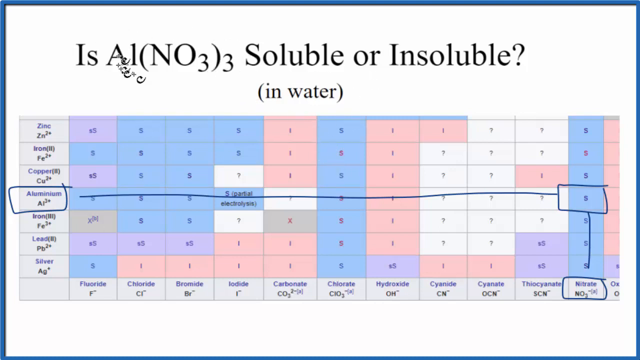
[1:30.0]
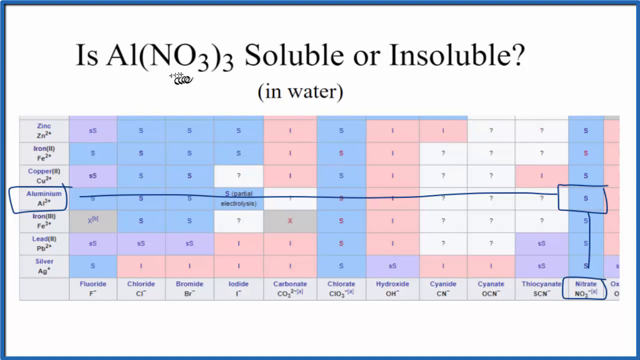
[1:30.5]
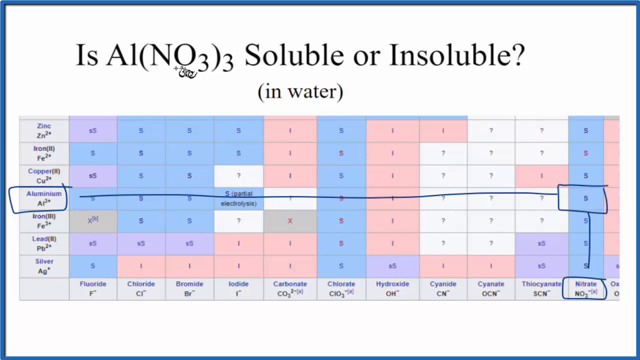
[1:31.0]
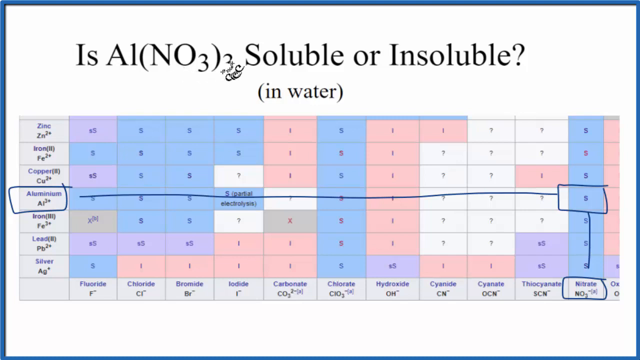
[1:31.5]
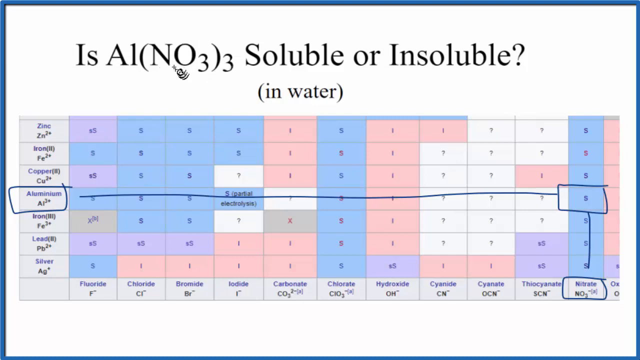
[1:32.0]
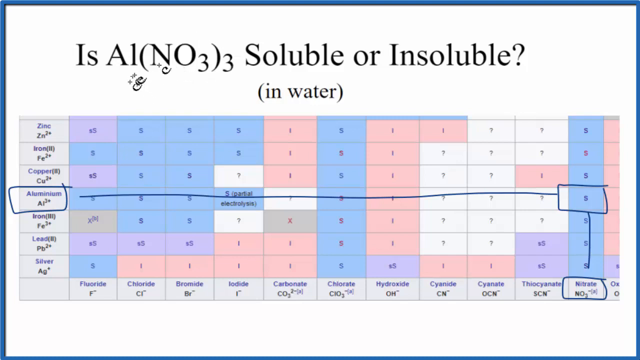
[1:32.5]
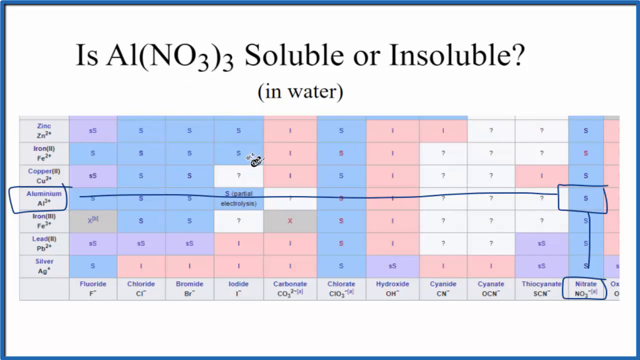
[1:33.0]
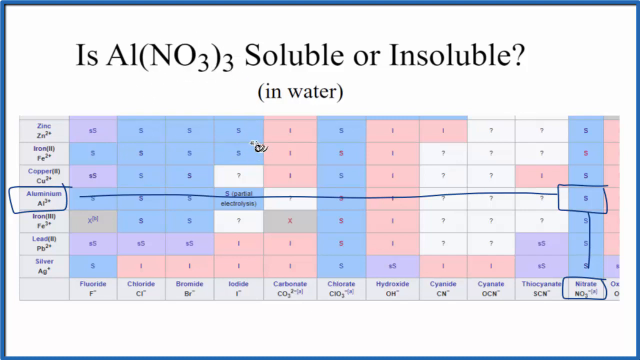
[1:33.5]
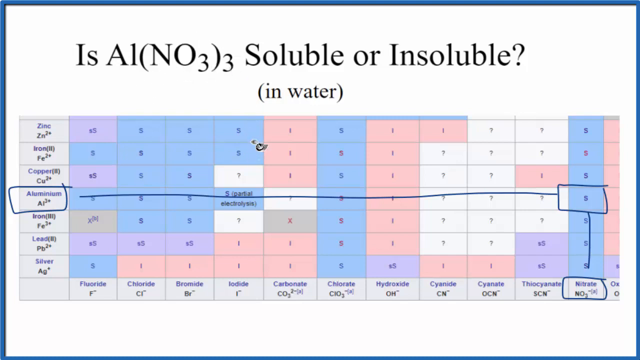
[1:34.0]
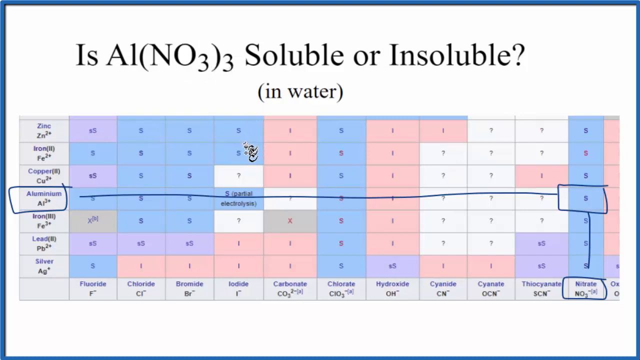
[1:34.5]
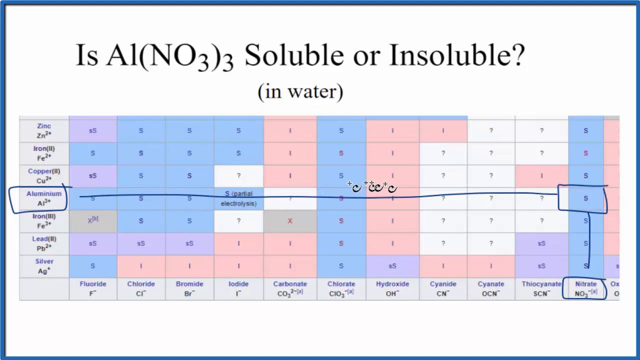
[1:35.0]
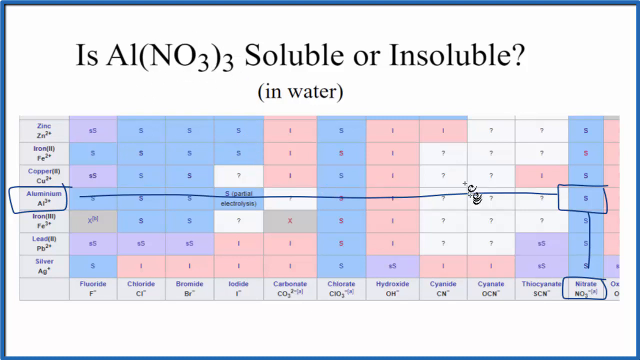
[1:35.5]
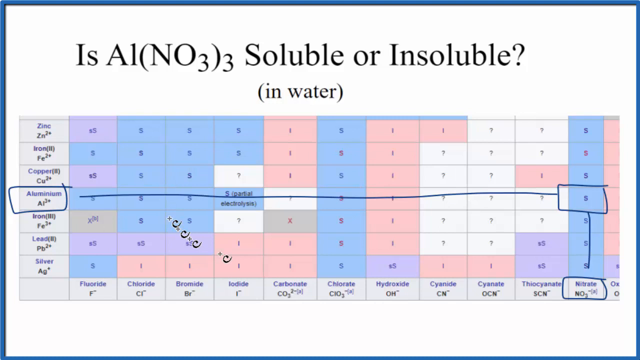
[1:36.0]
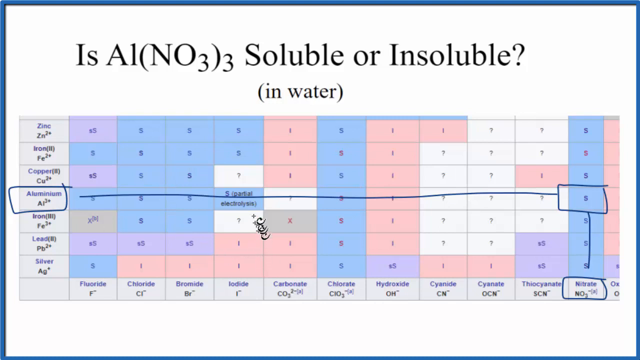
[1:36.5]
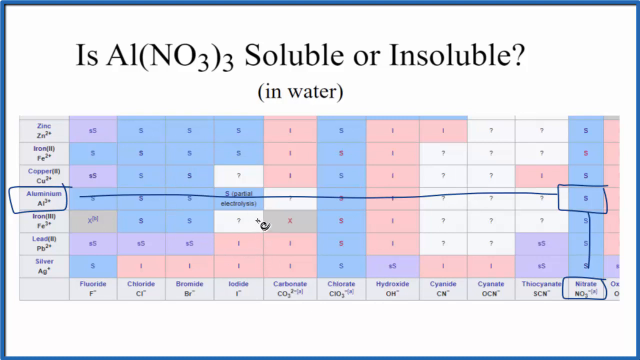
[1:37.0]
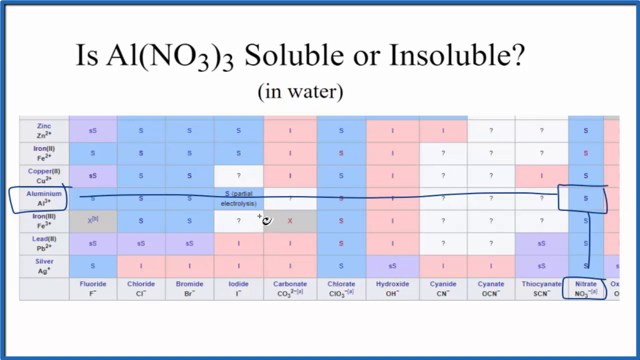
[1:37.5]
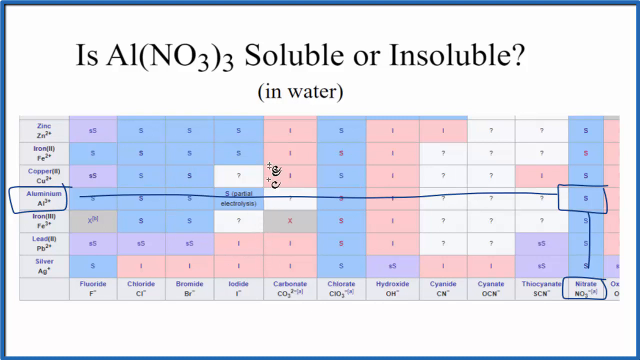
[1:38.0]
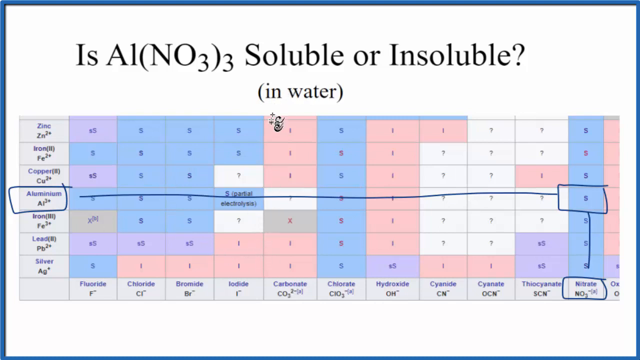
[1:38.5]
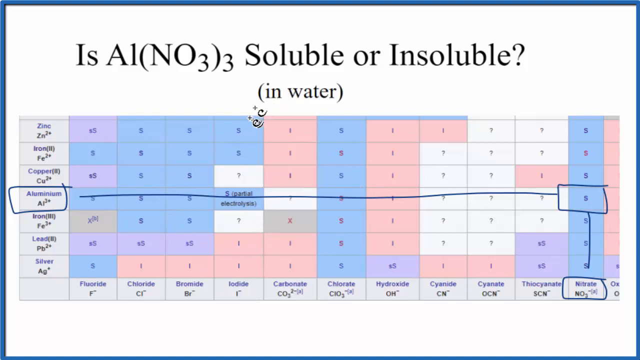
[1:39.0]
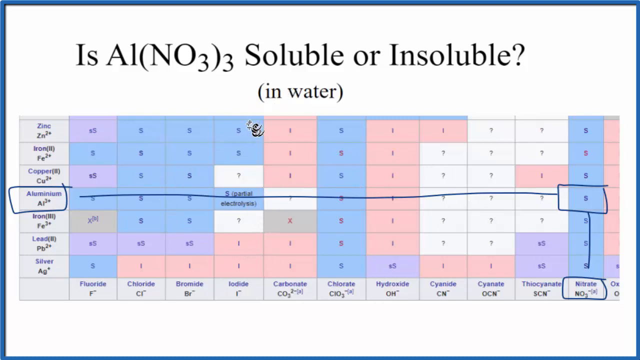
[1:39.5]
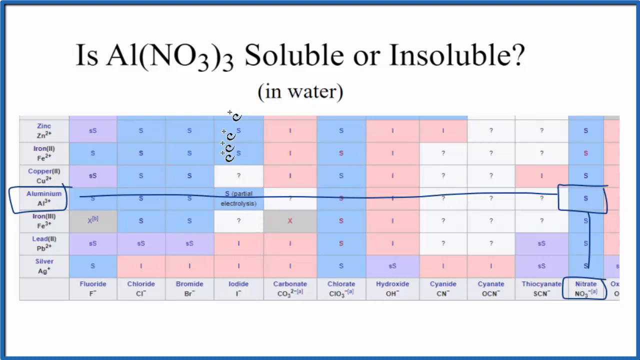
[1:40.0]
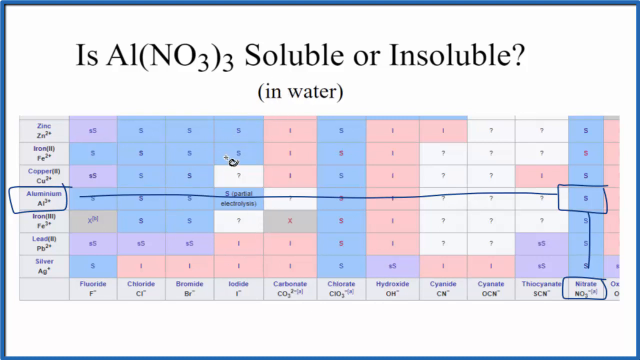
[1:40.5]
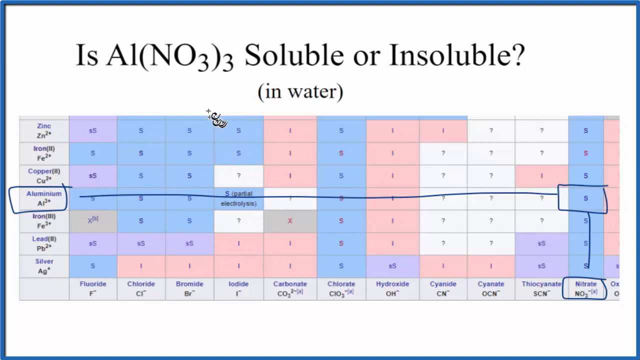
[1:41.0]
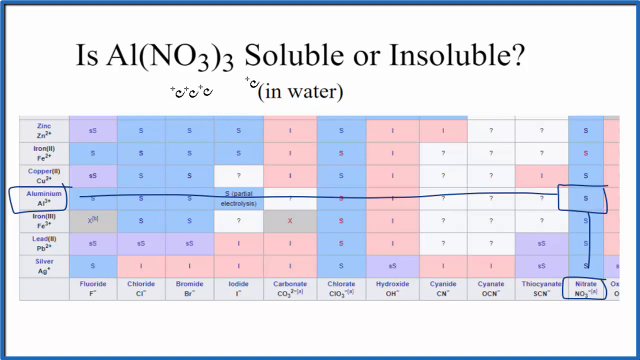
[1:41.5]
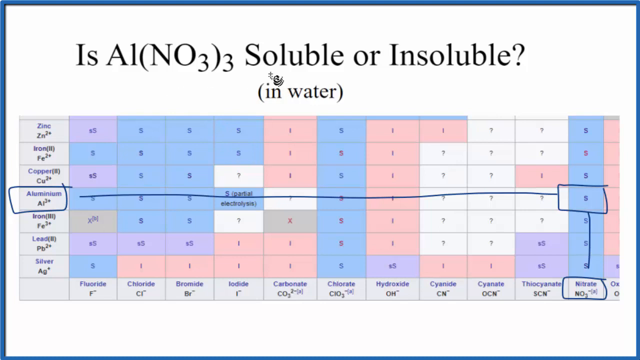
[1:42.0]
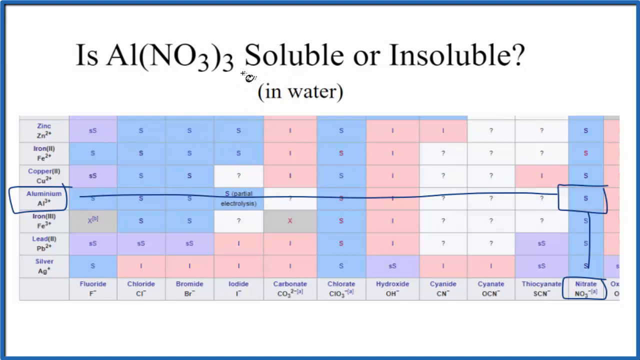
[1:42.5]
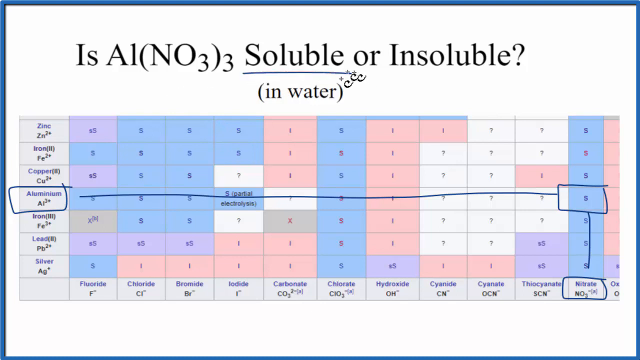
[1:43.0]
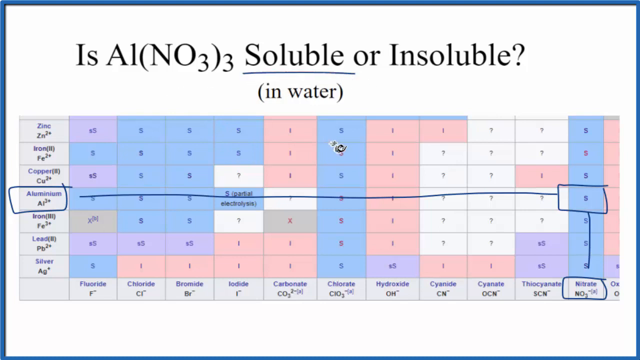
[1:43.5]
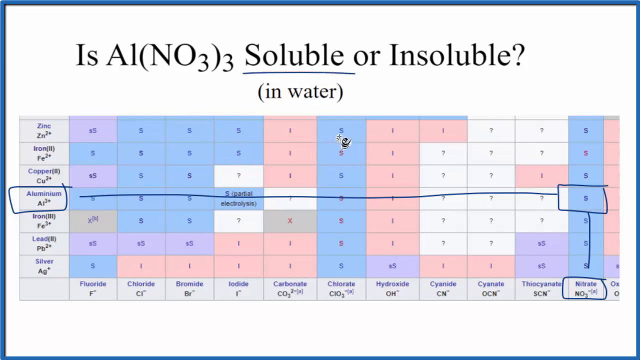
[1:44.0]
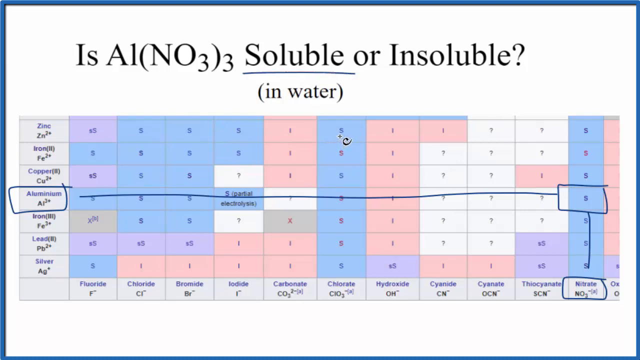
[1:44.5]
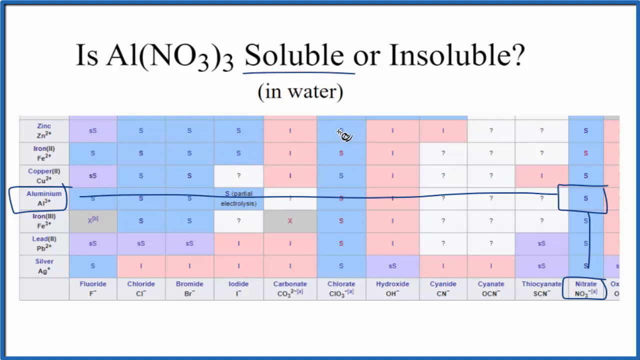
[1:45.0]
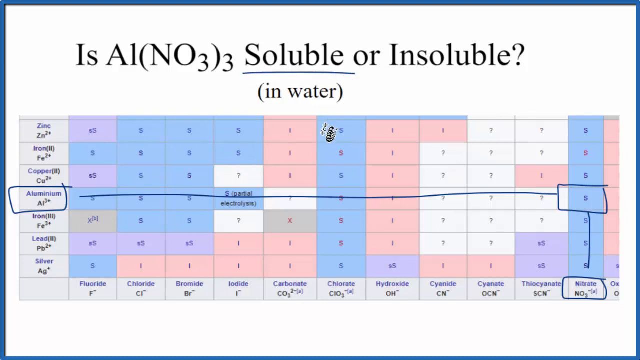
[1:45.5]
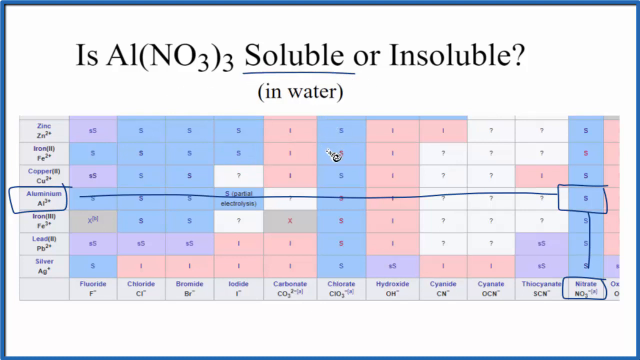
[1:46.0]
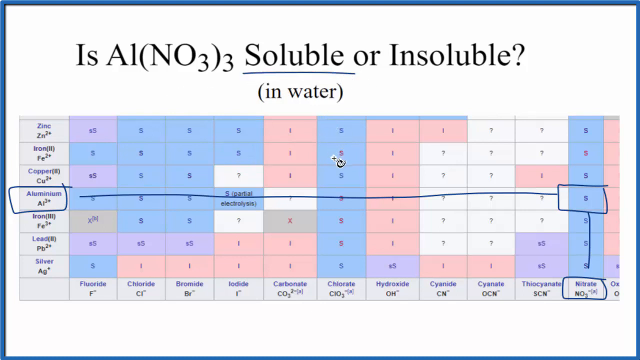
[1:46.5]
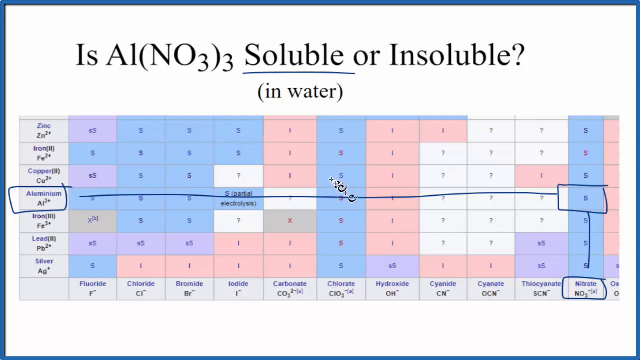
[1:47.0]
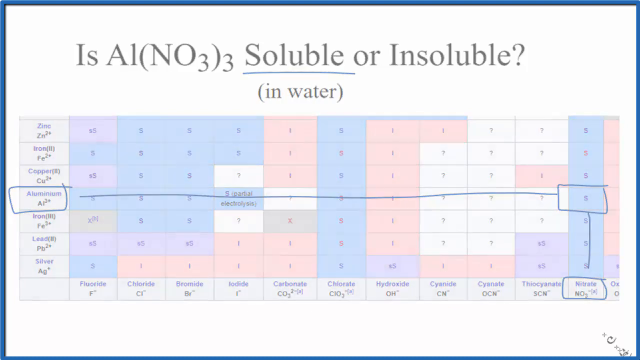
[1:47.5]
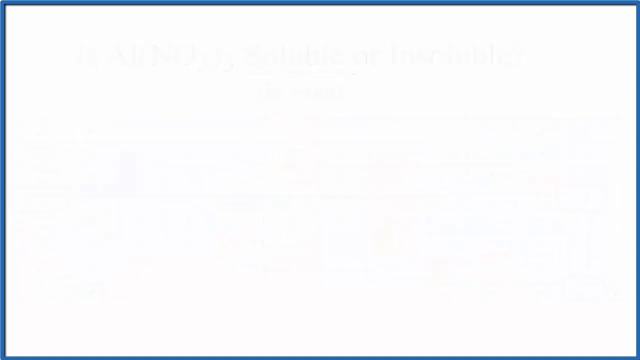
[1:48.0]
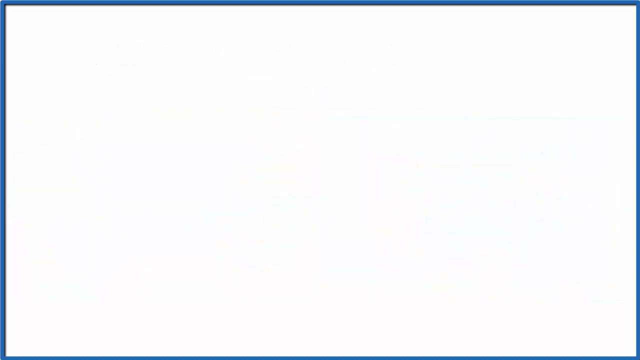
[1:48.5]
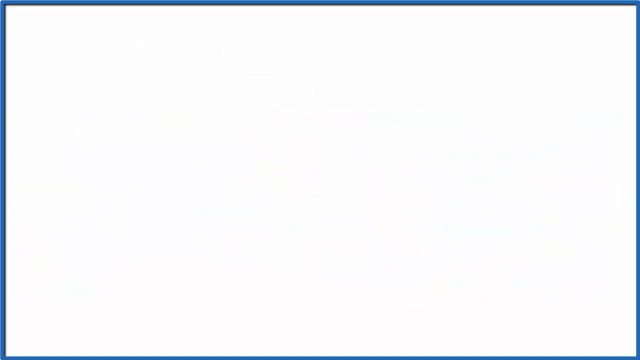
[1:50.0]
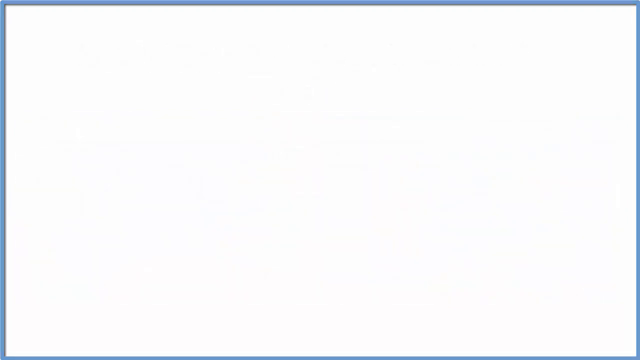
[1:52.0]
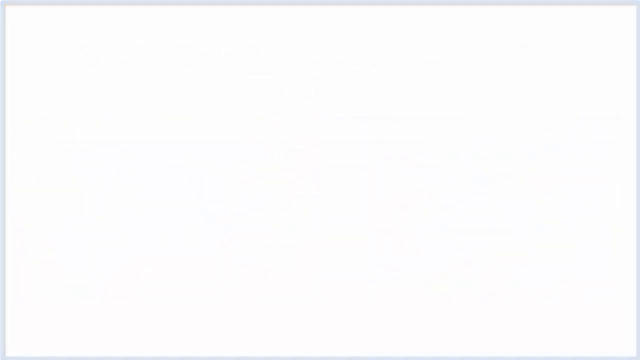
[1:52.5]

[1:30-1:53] The cursor continues to hover underneath and frantically circle around and around NO3 before bouncing back down to the table and hovering over the iodide column, moving extremely erratically and haphazardly. It then zooms back up to the word "soluble" in the title and underlines it, before making its way down to the chlorate column and hovering over a few of the boxes there. Finally, the cursor zooms off and disappears from the bottom right-hand corner of the frame, leaving a plain white screen behind.